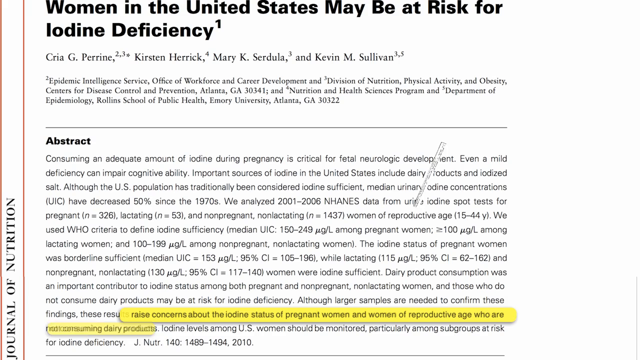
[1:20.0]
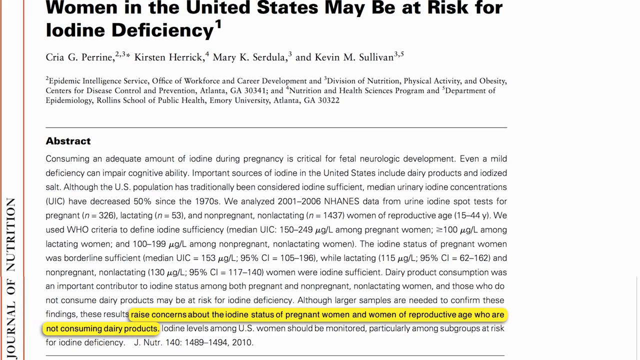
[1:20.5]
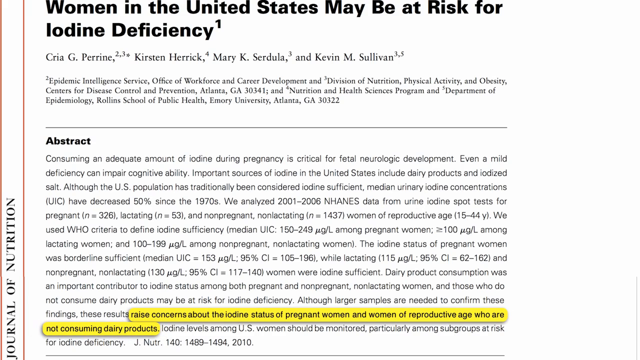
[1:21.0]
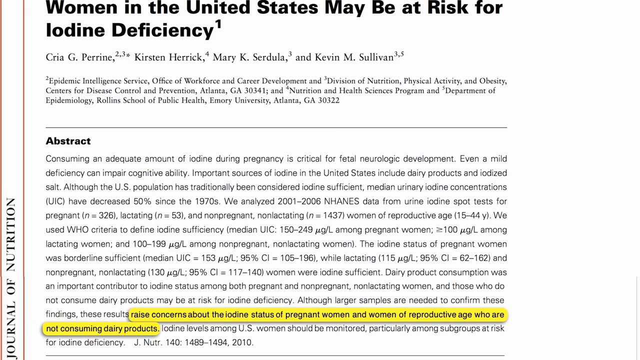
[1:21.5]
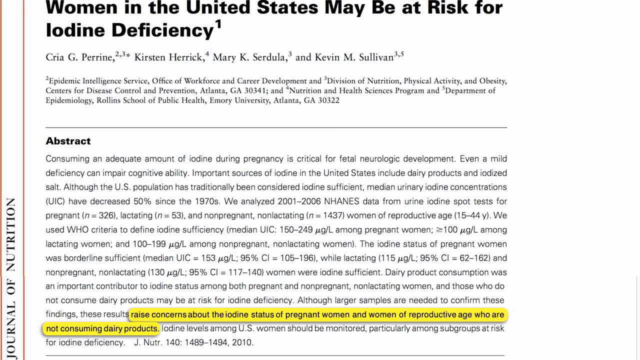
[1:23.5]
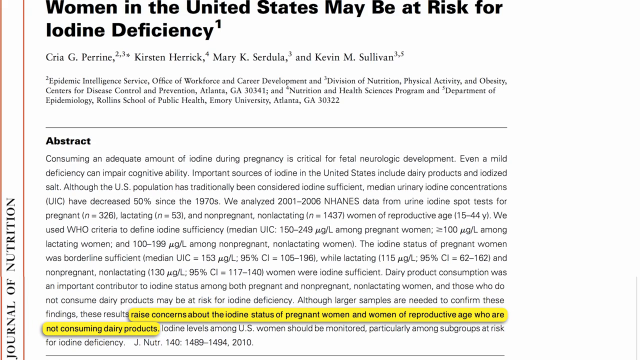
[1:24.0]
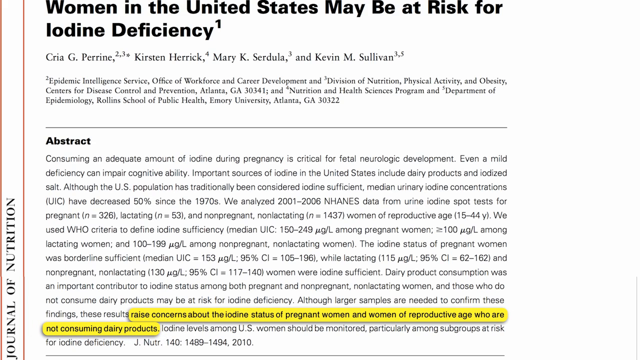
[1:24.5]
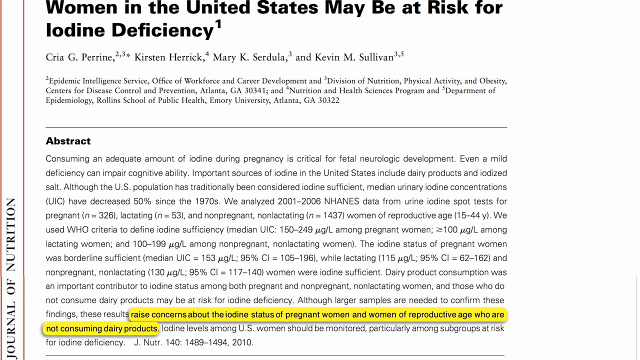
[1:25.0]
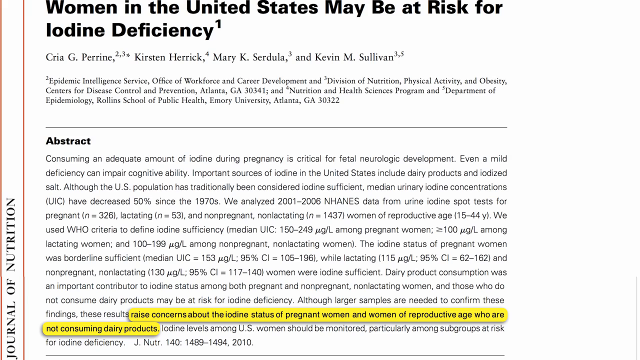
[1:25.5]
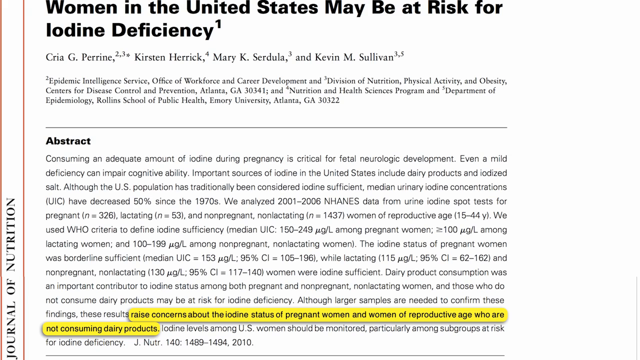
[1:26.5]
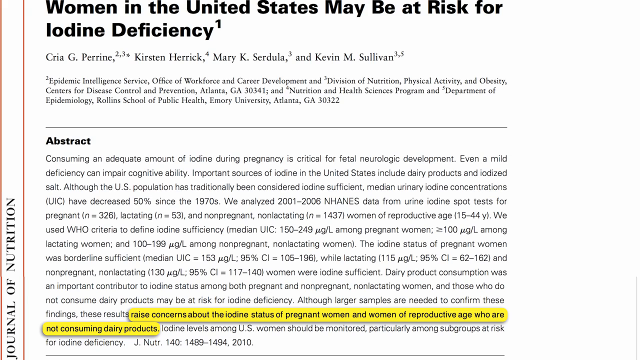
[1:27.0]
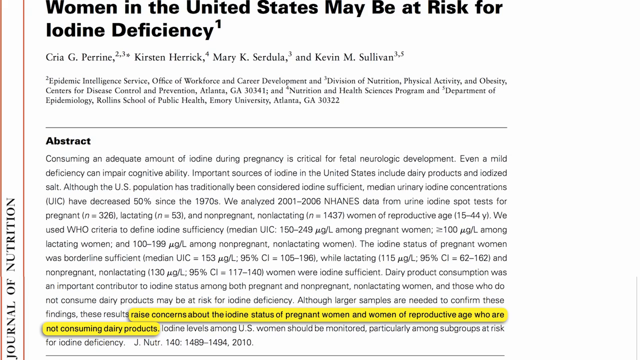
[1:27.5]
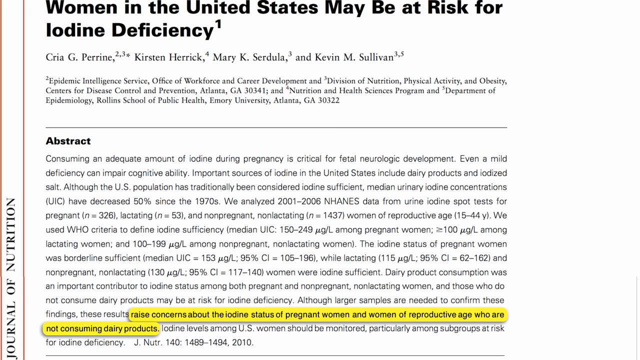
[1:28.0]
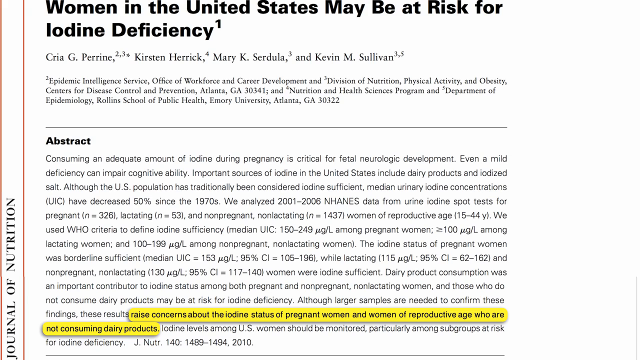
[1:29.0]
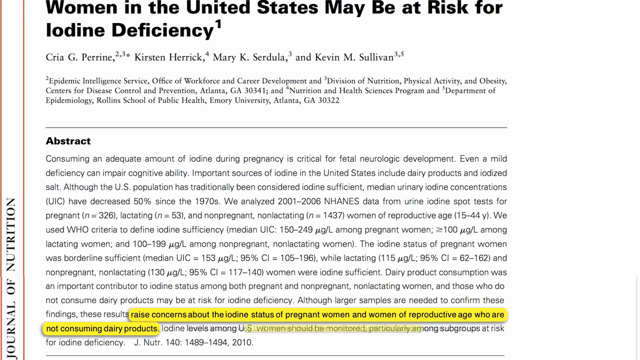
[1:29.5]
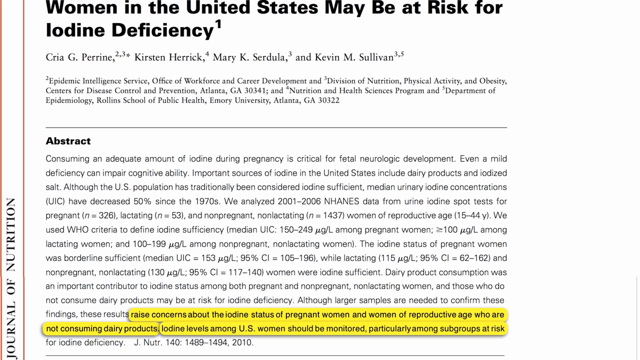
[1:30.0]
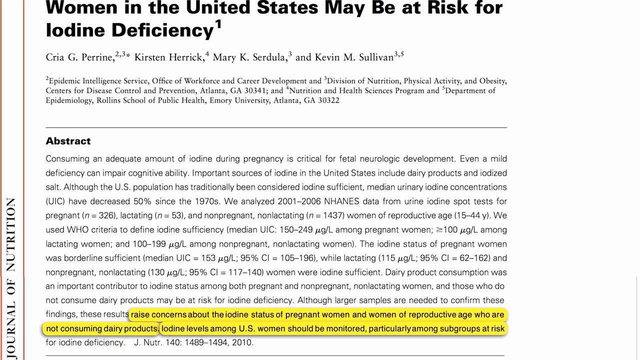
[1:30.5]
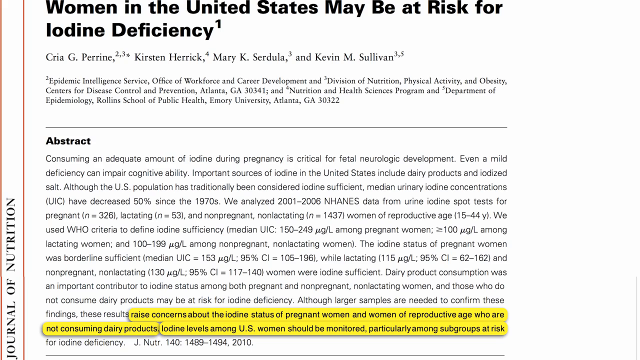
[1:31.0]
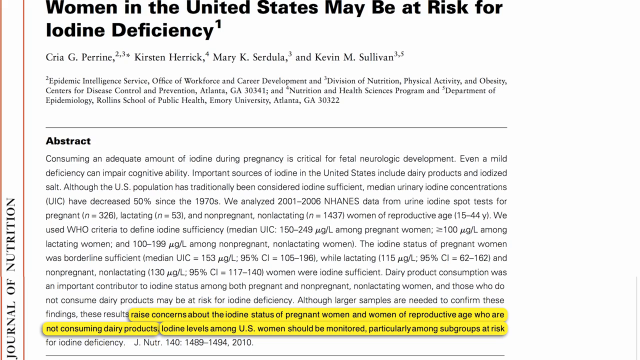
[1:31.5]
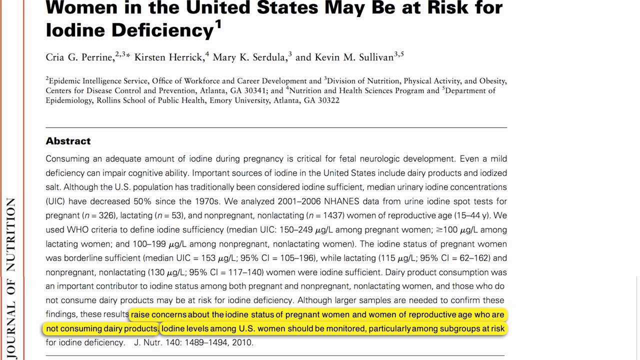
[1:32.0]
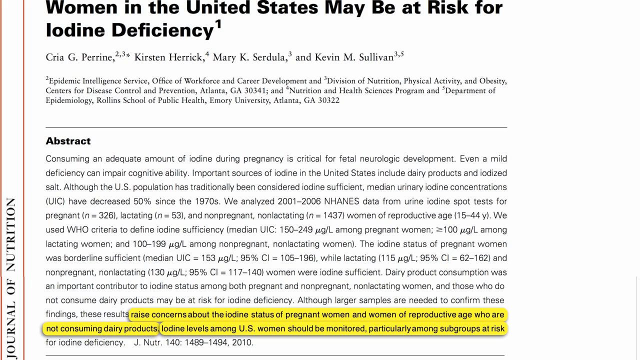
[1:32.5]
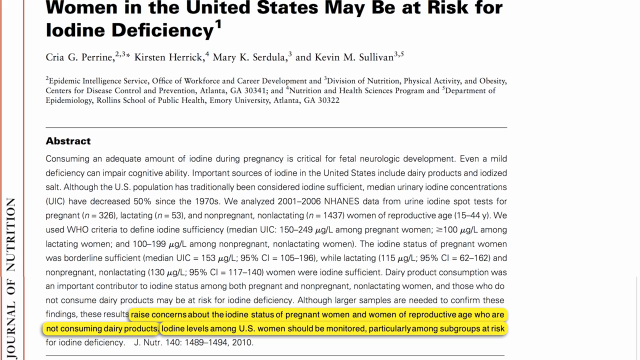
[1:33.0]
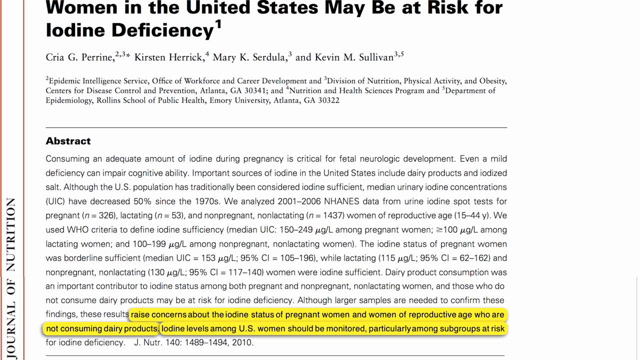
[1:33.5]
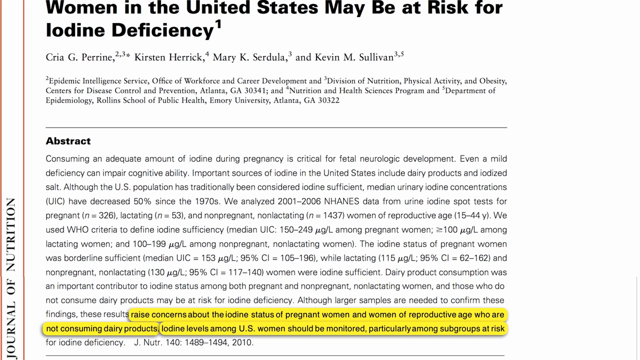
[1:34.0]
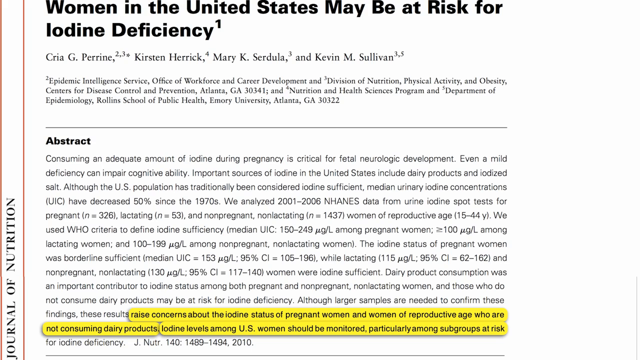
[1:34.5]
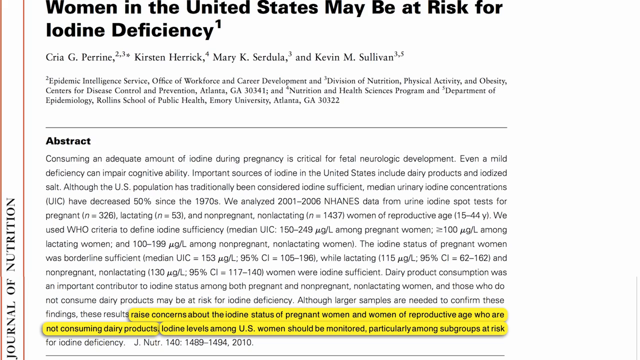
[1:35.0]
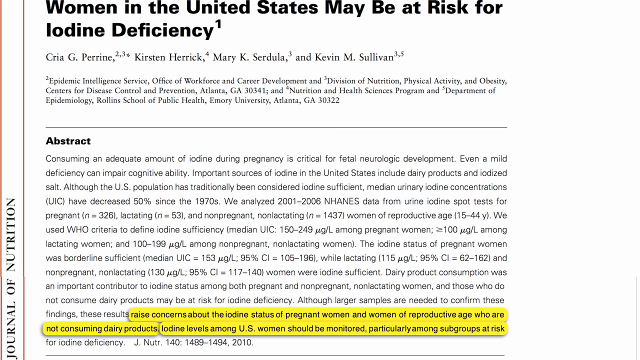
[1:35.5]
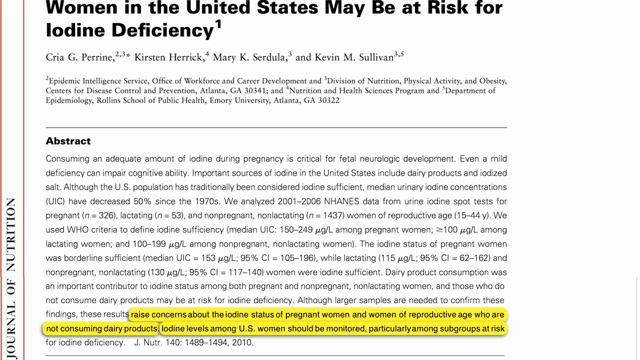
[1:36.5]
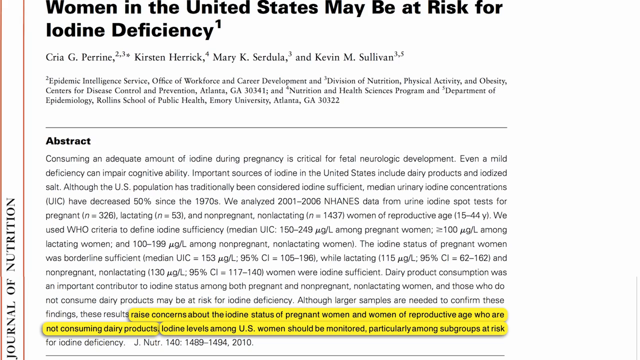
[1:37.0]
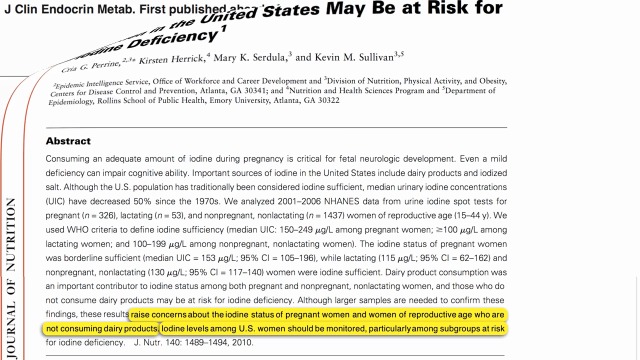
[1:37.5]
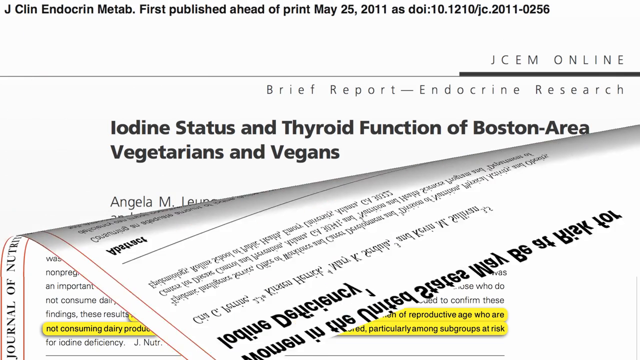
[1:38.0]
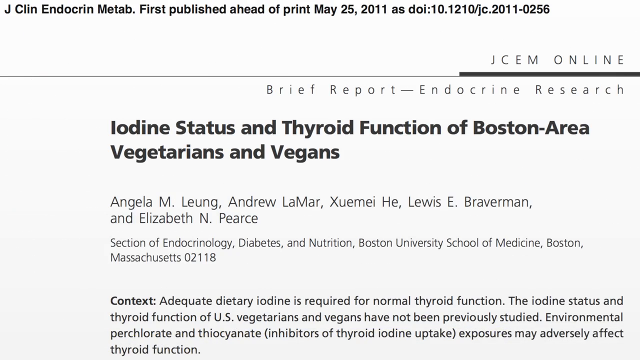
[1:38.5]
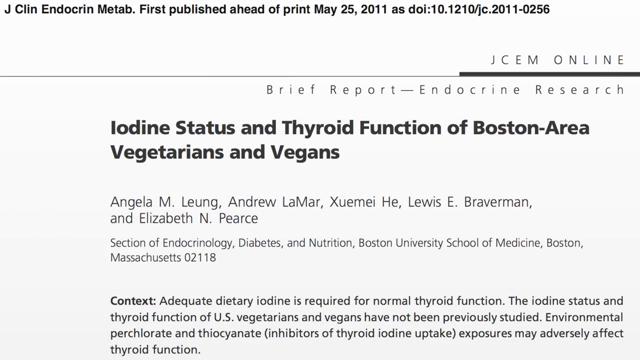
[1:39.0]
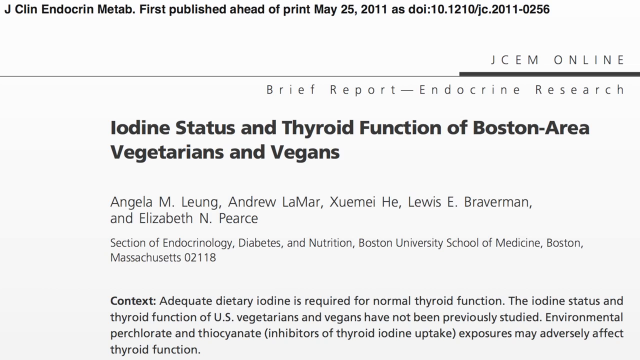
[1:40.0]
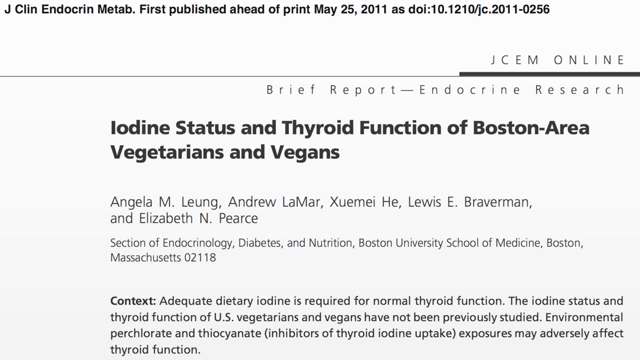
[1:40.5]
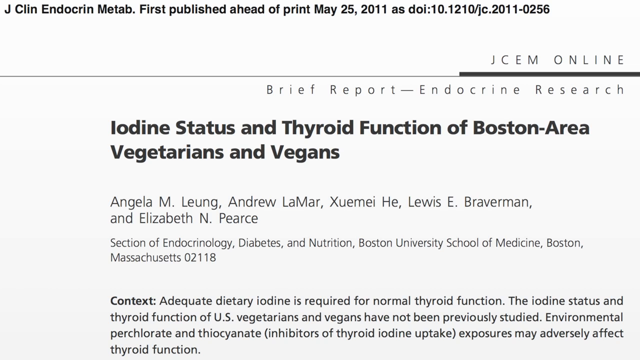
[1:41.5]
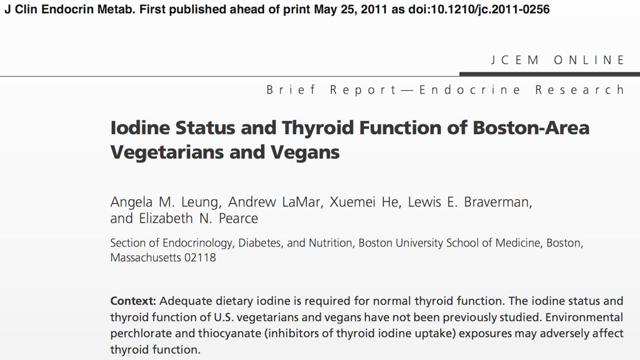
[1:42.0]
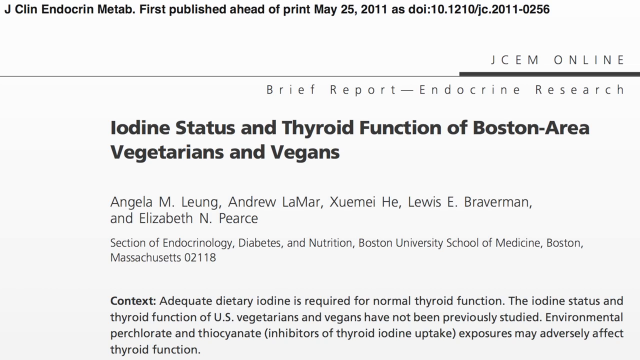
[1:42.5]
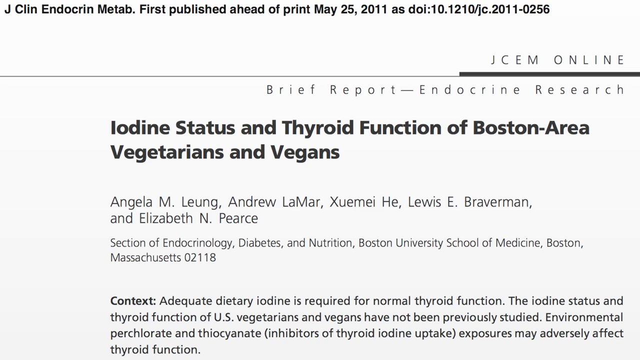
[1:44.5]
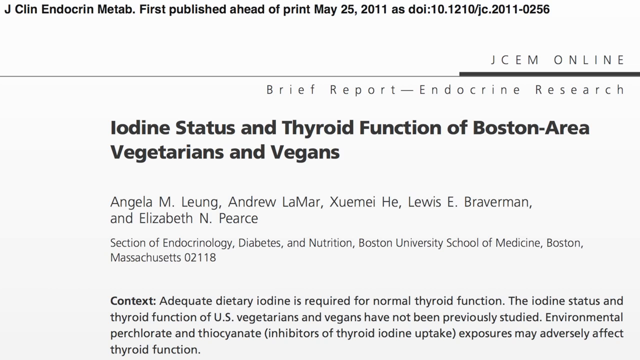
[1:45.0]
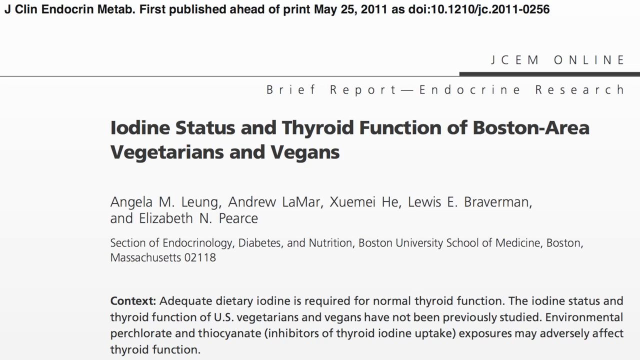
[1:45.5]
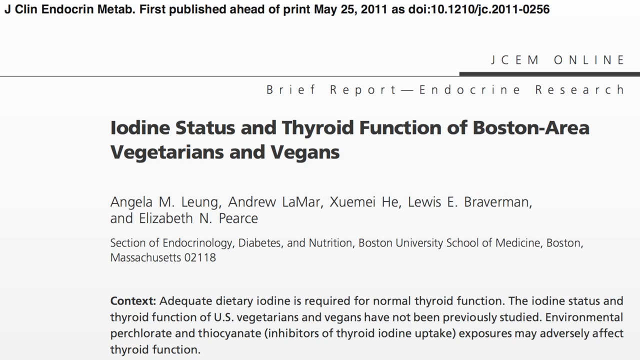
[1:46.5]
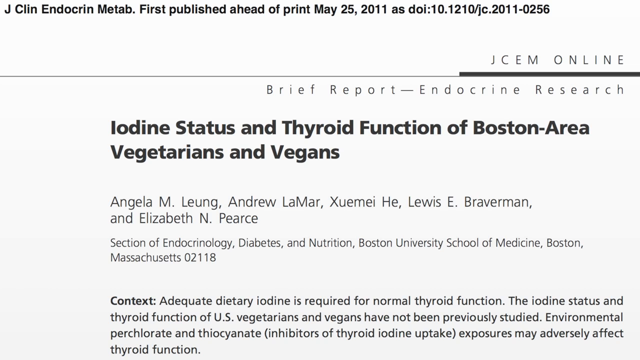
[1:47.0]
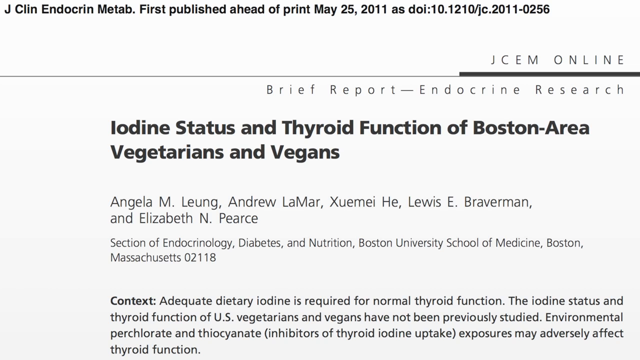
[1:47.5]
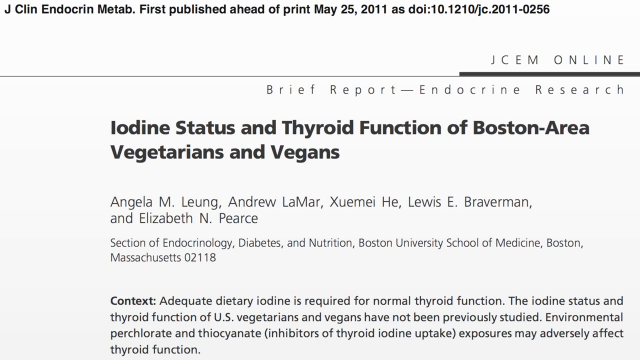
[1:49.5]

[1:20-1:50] A title ending "women in the United States may be at risk for iodine deficiency" is bold at the top, with the people who worked on the article, followed by an abstract. On the left-hand side it says "Journal of Nutrition." The last sentence shown is highlighted: "raised concerns about the iodine status of pregnant women and women of reproductive age who are not consuming dairy products. Iodine levels among U.S. women should be monitored, particularly among subgroups at risk." Next, "iodine status and thyroid function of Boston-area vegetarians and vegans" appears in bold at the top. A line at the top says "JCM online," and also in bold at the top is "first published ahead of print May 25, 2011," followed by a number. Under "JCM online" it says "brief report." The page lists the people who did the research, as well as context.